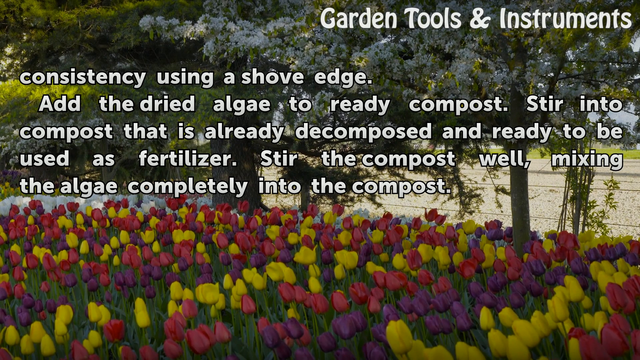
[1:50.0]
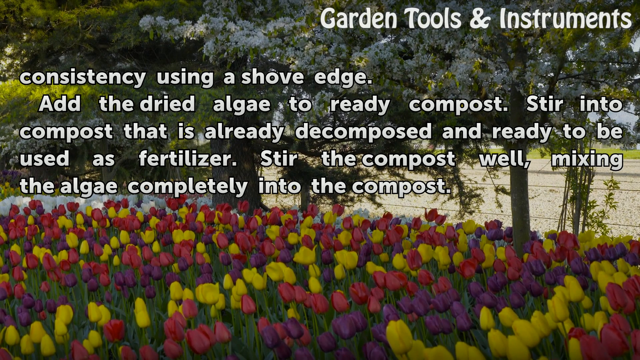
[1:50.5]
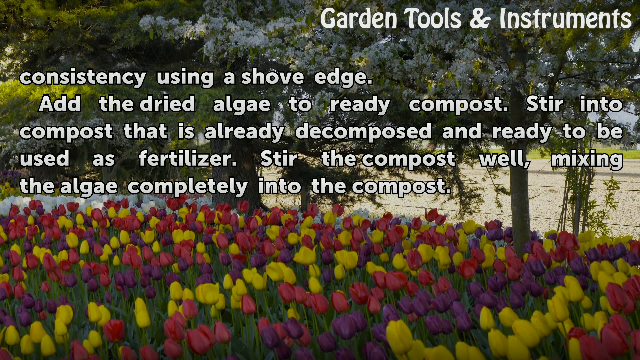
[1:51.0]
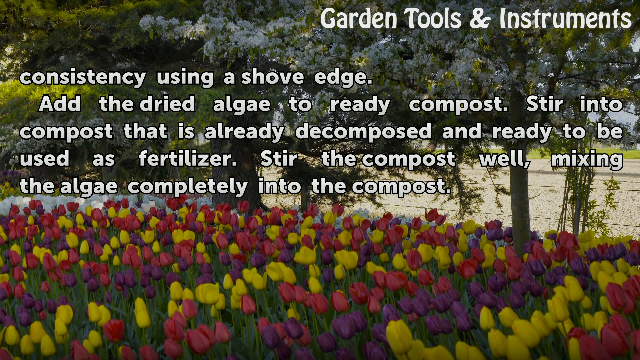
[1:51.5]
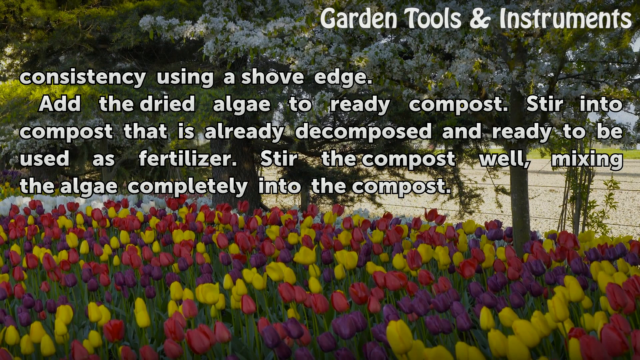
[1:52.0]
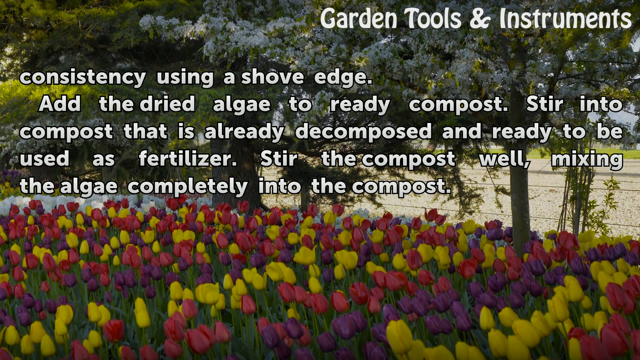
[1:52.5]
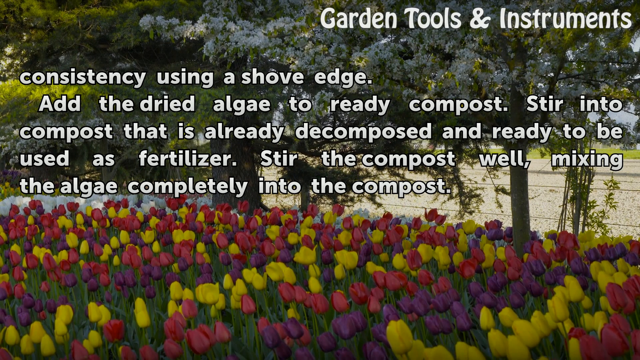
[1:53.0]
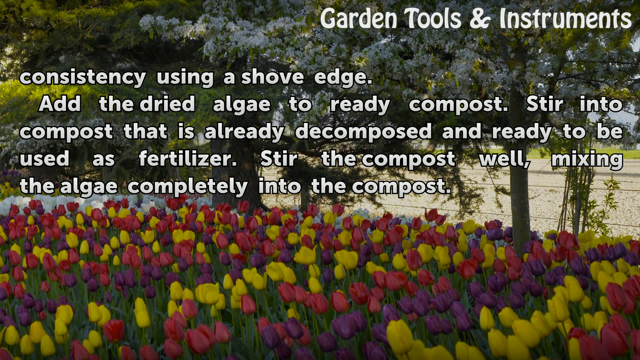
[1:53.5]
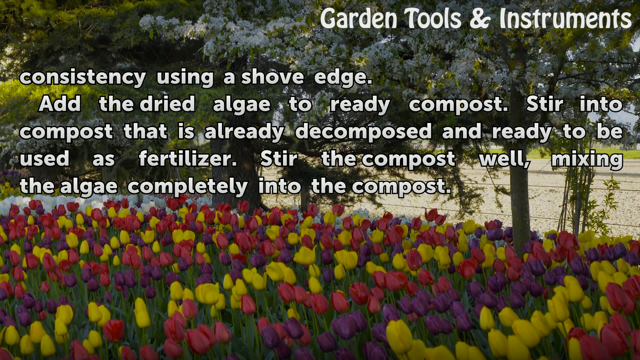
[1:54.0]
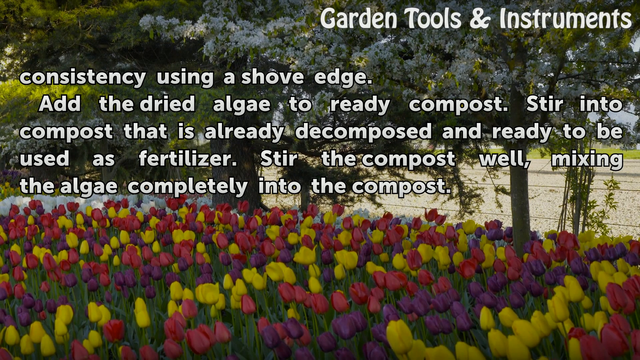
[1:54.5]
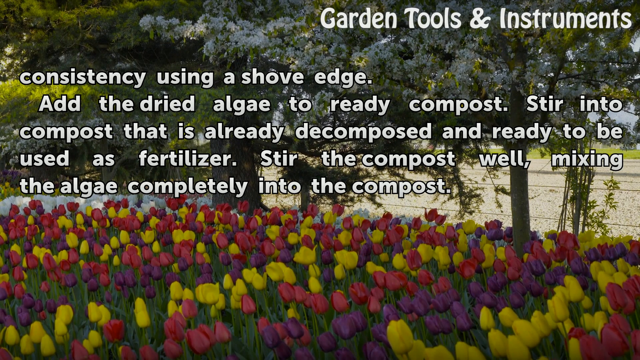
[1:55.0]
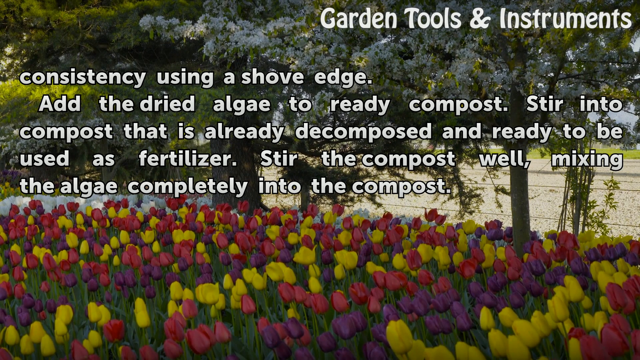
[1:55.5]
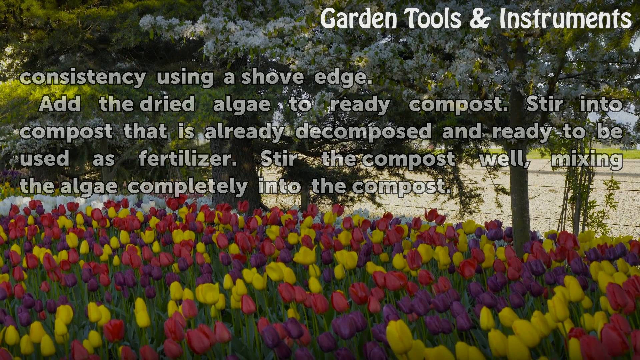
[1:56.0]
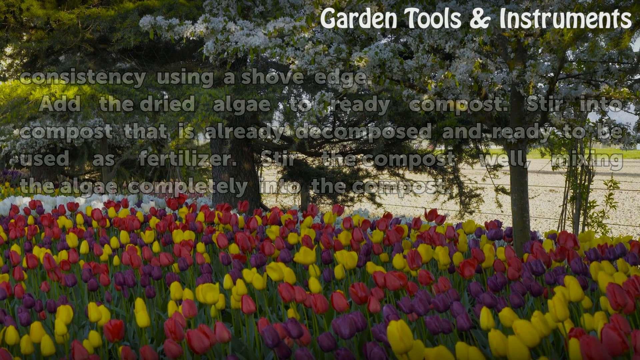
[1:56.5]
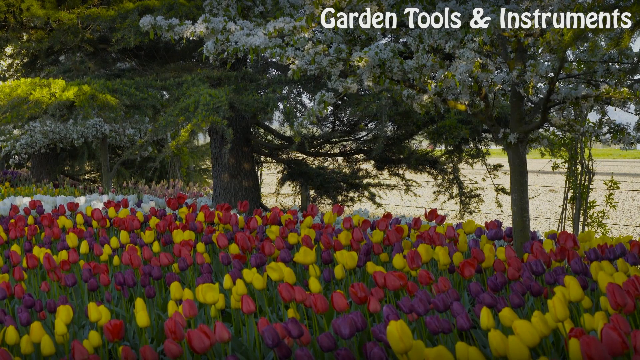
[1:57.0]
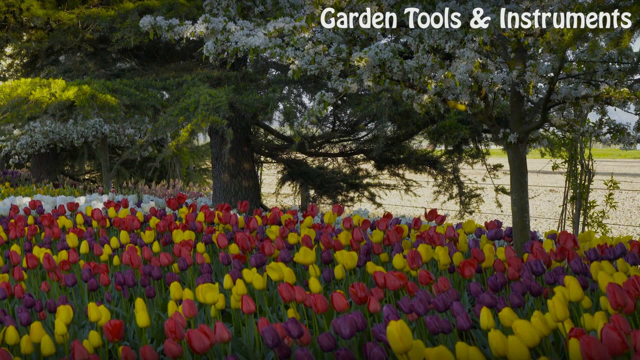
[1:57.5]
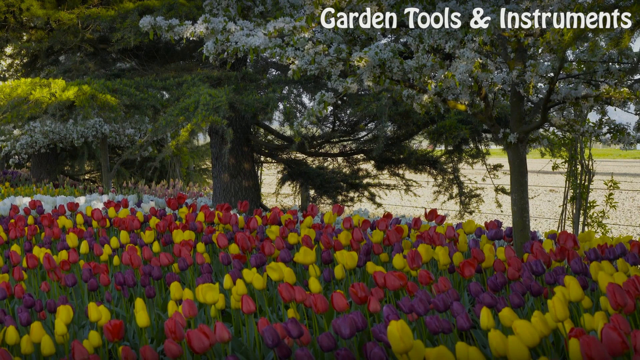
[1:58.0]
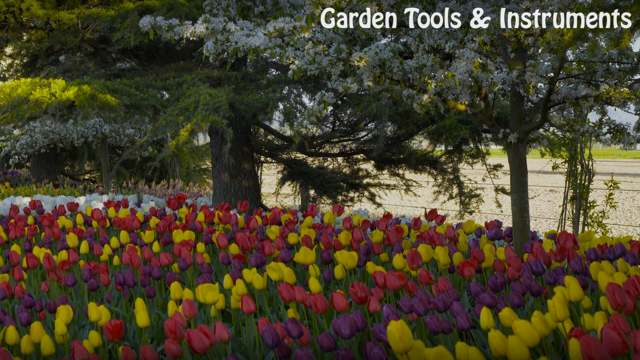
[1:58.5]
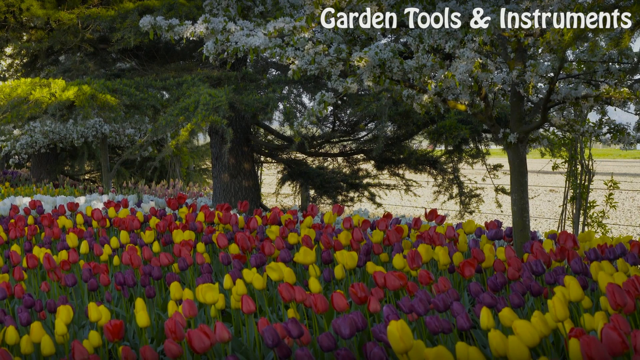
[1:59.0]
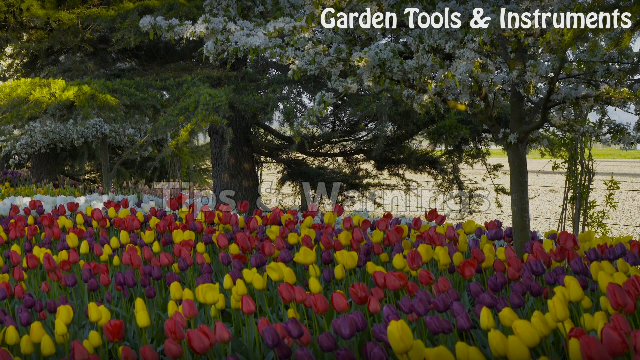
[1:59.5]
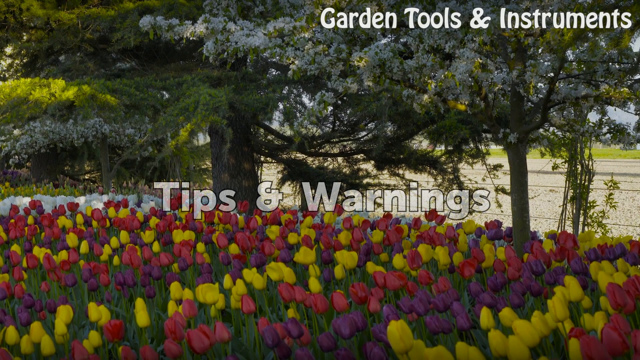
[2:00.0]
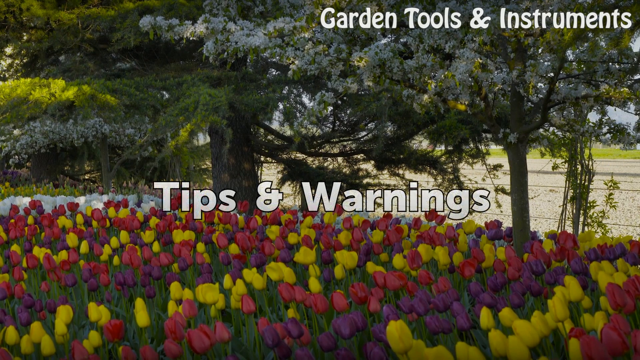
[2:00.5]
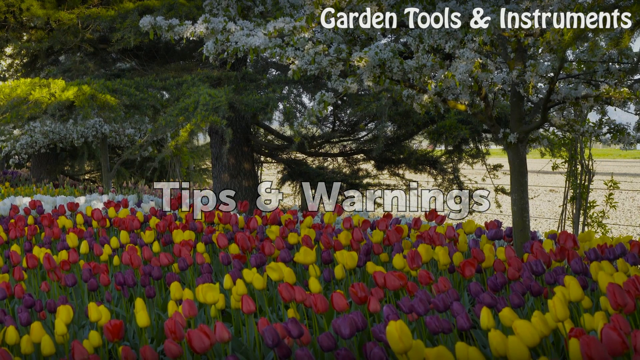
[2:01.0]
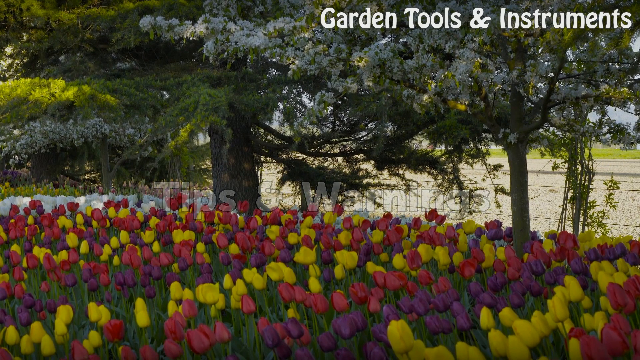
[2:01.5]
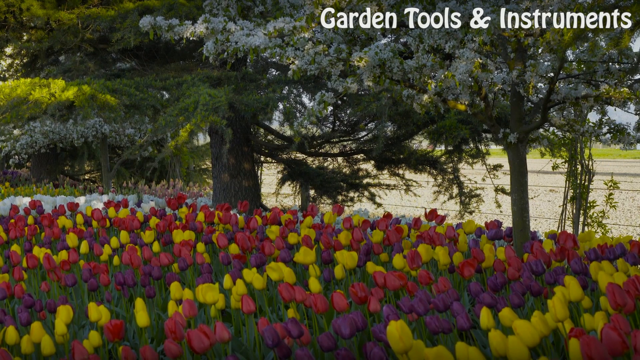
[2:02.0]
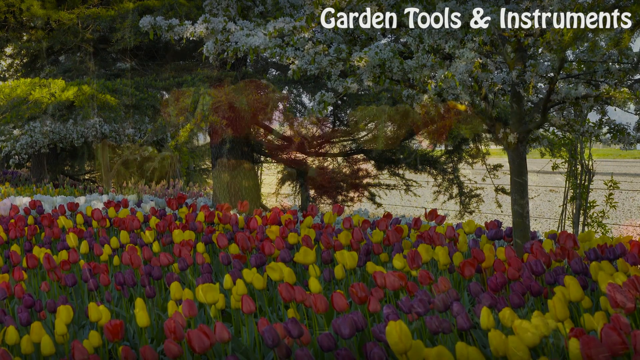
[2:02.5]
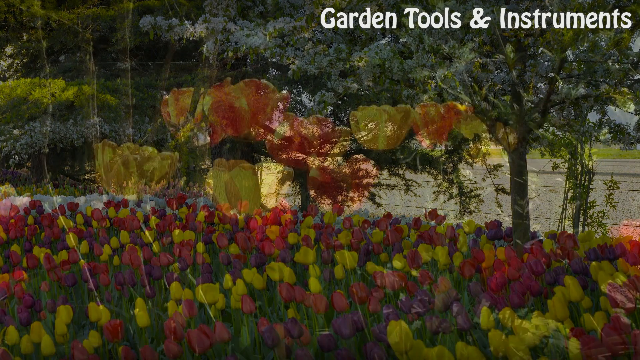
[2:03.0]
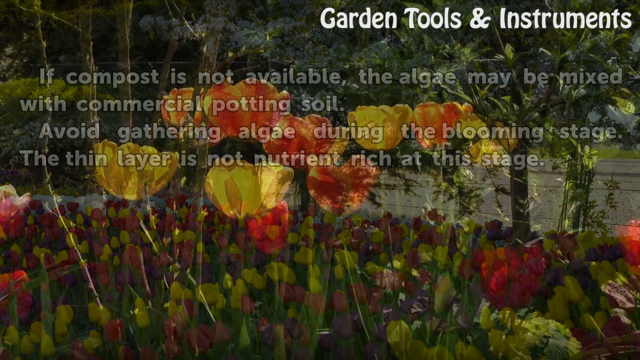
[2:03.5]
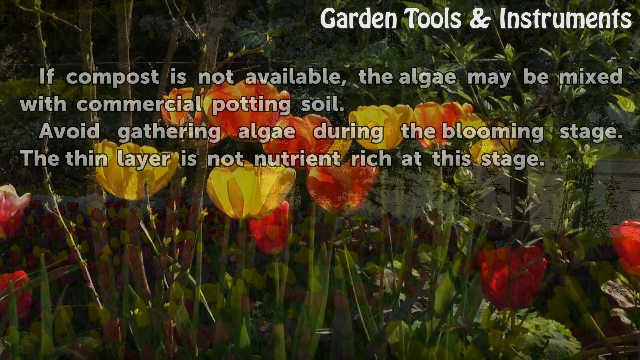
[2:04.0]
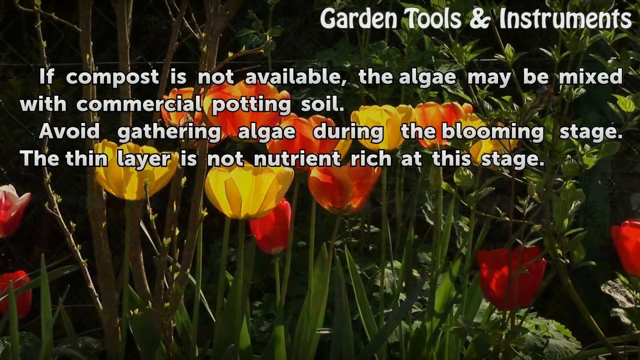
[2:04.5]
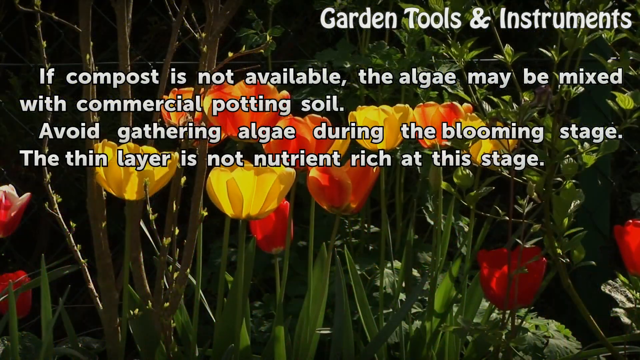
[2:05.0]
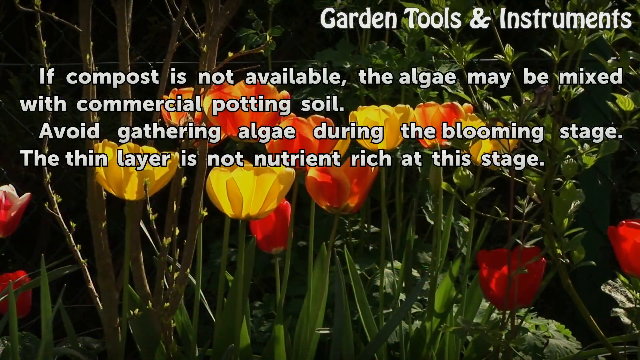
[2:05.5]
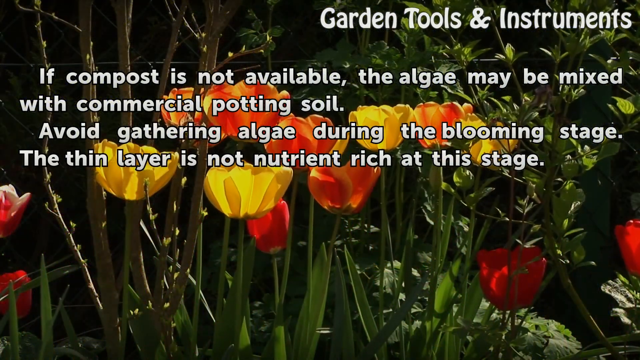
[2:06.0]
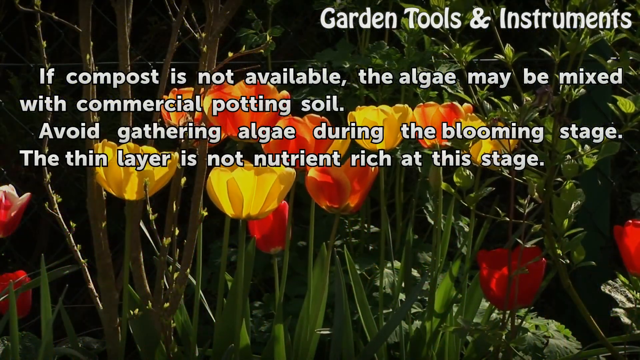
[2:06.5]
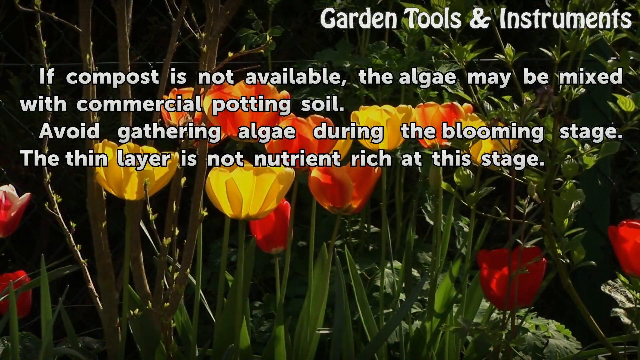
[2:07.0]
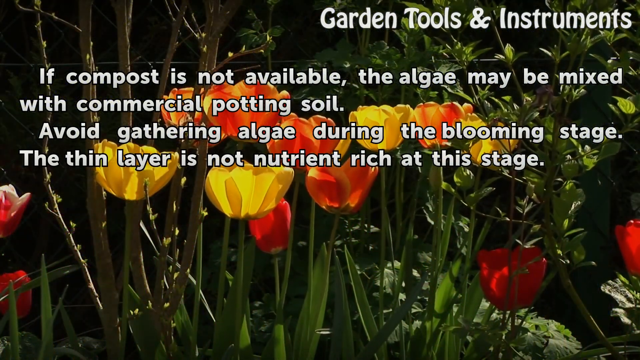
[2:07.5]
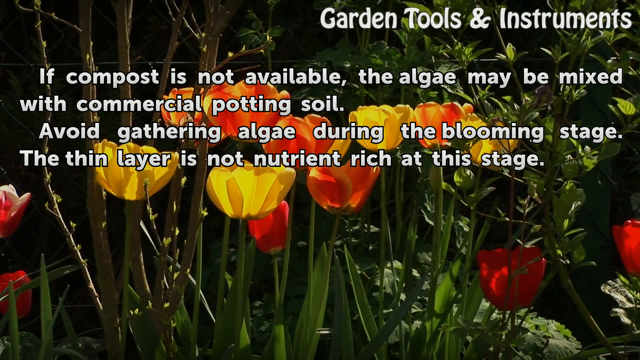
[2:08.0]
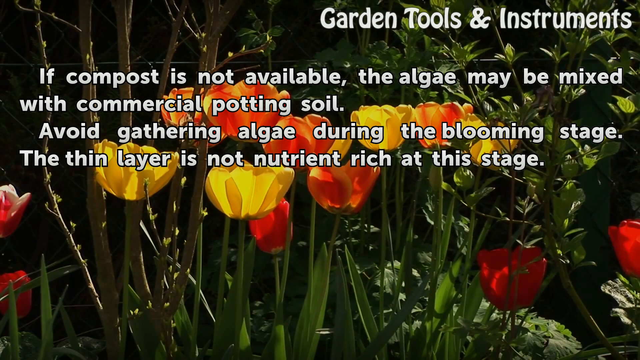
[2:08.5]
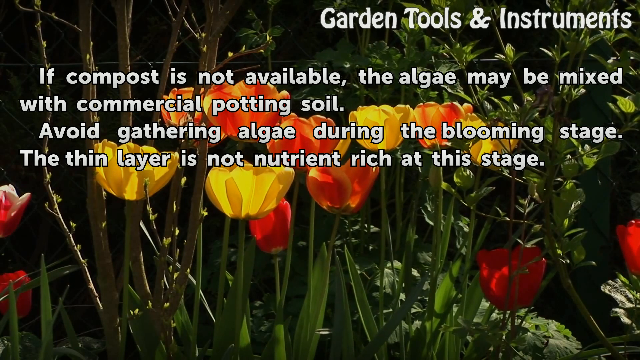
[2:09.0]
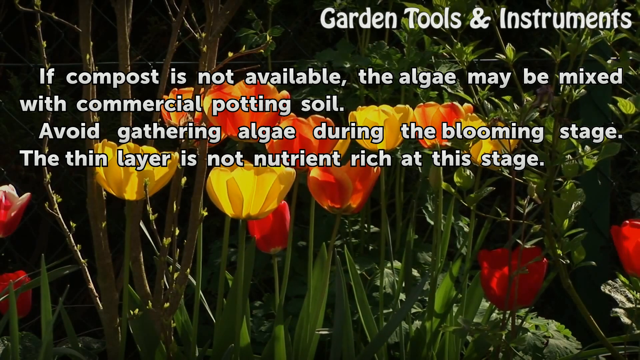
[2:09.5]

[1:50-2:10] Text under "garden tools and instruments" reads "Consistency, using a shovel edge, add the dried algae to ready compost. Stir in the compost that is already decomposed and ready to be used as fertilizer. Stir the compost well, mixing the algae completely into the compost." Part of the text appears to read "shove edge," seemingly a spelling mistake. The background shows tulips placed in front of some trees, possibly wisteria. A "tips and warnings" section then appears: "if compost is not available, the algae may be mixed with commercial potting soil. Avoid gathering algae during the blooming stage. The thin layer is not nutrient-rich at this stage."